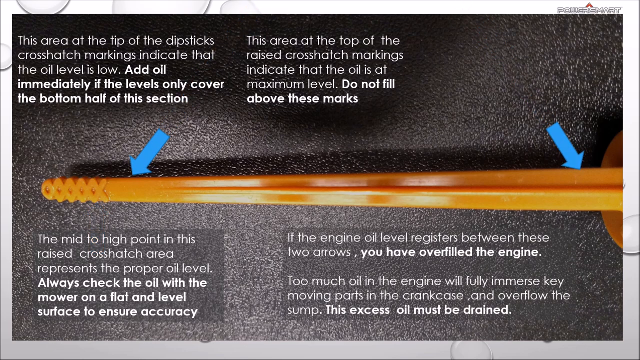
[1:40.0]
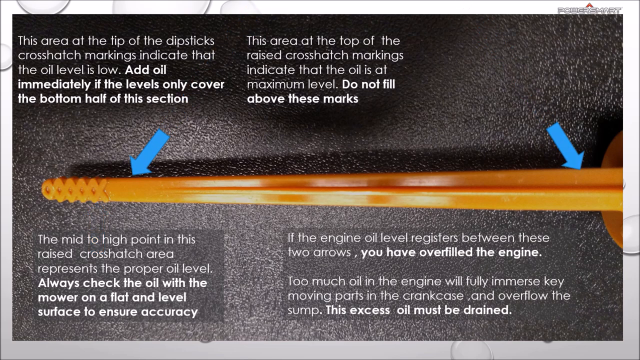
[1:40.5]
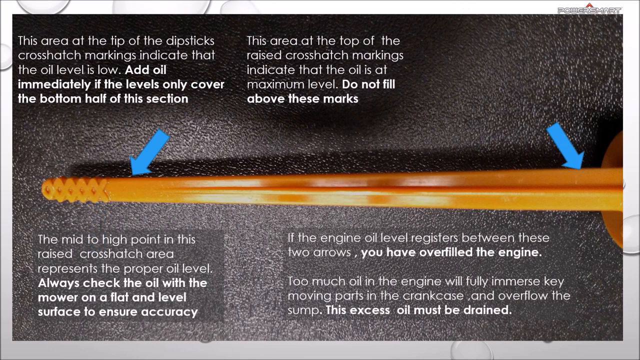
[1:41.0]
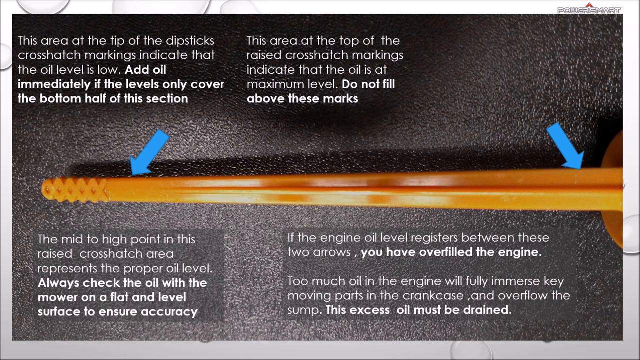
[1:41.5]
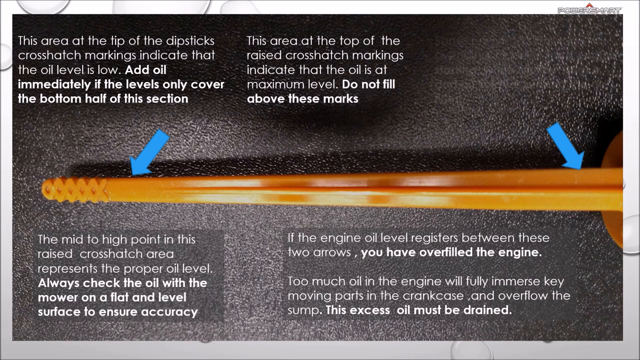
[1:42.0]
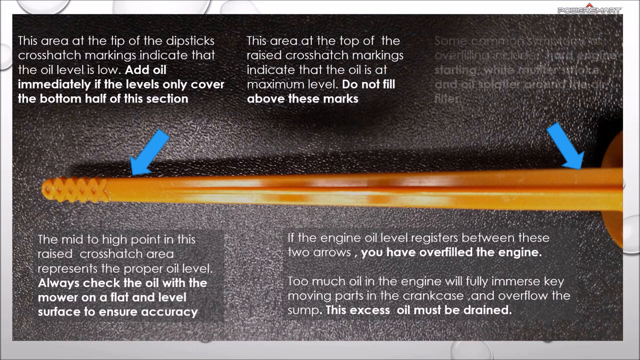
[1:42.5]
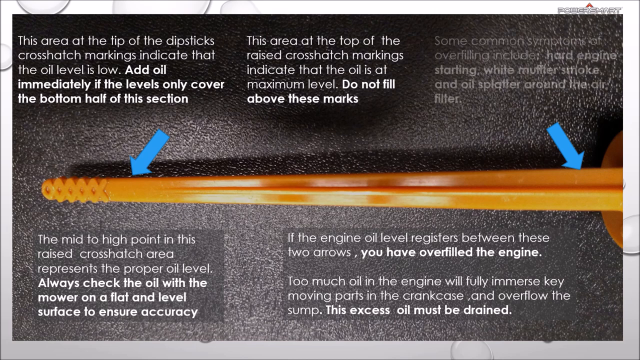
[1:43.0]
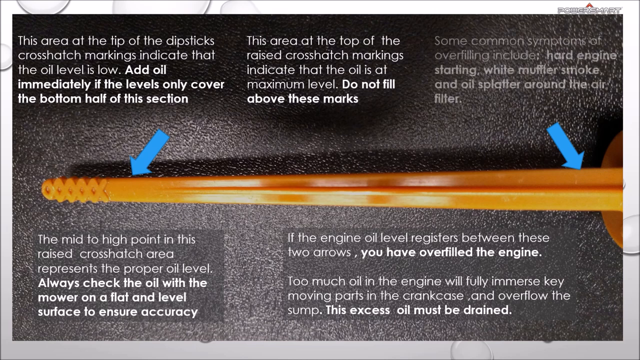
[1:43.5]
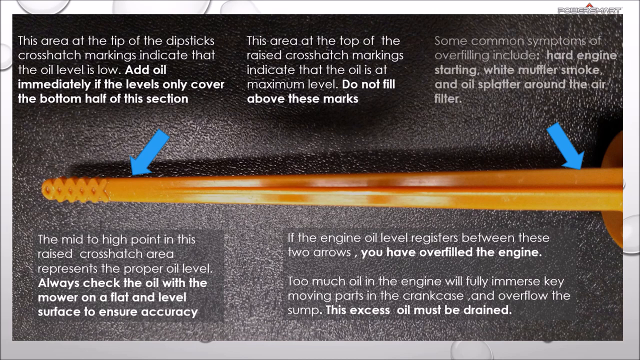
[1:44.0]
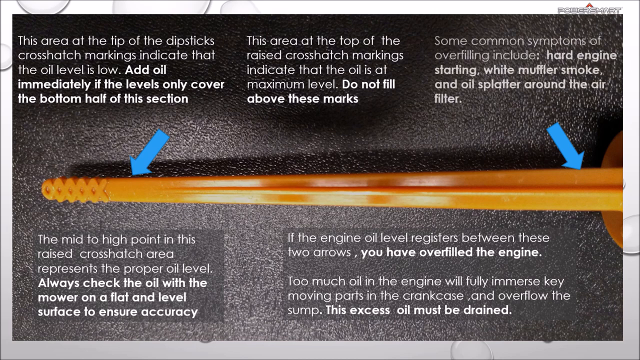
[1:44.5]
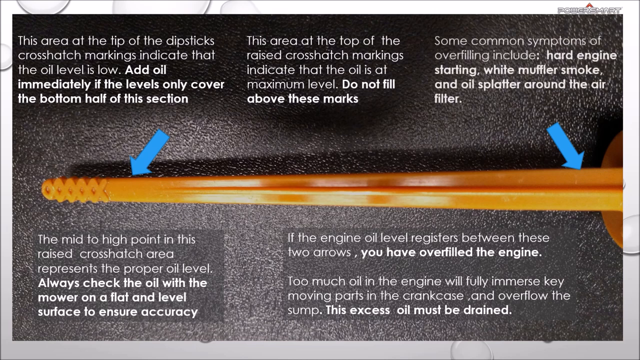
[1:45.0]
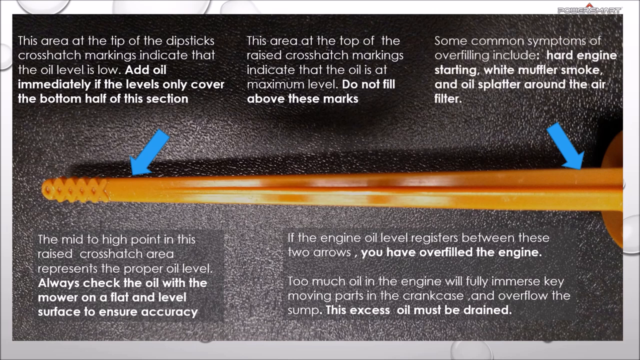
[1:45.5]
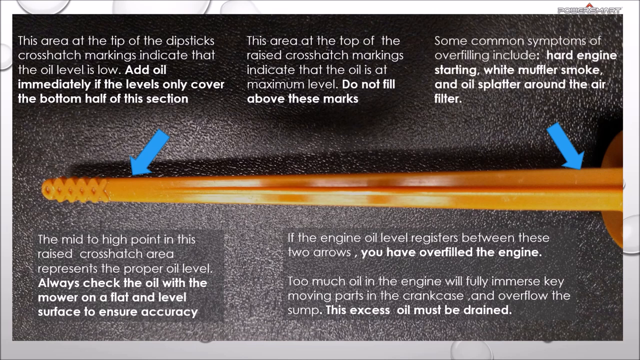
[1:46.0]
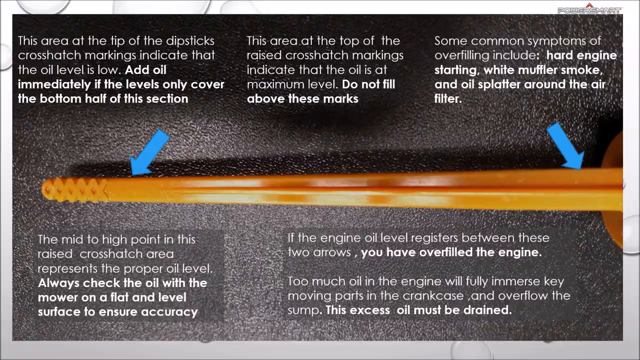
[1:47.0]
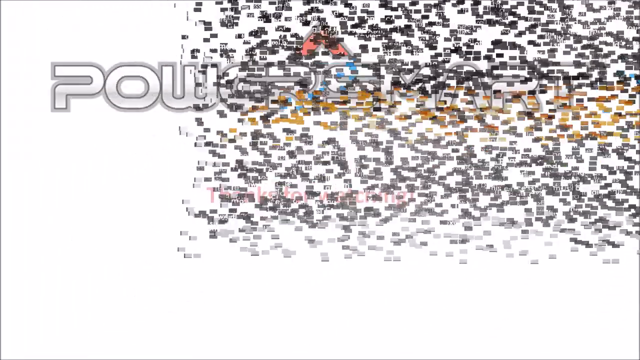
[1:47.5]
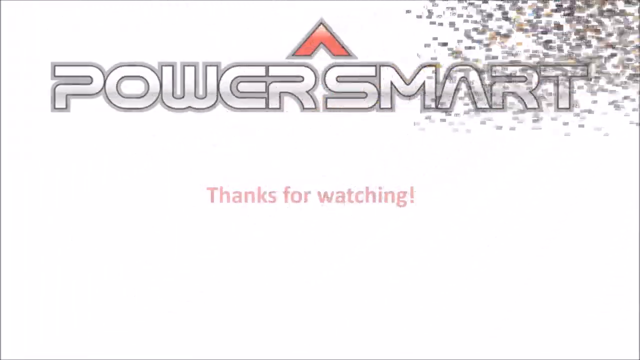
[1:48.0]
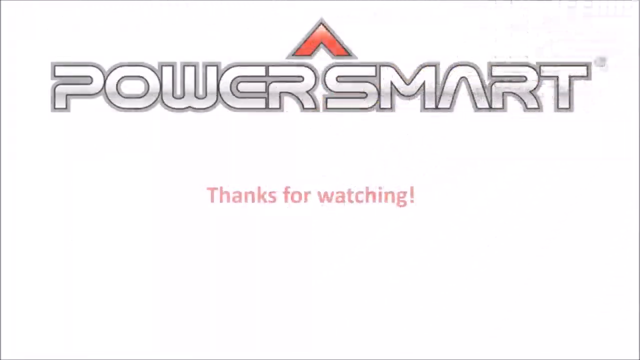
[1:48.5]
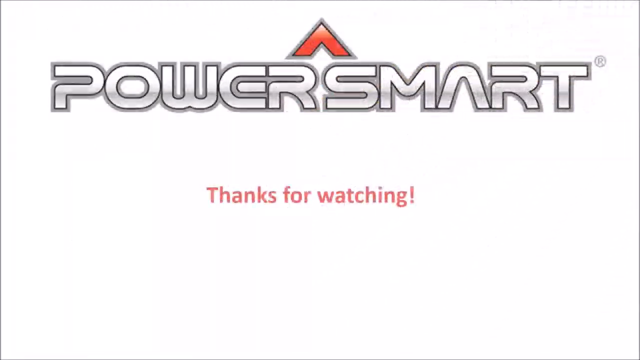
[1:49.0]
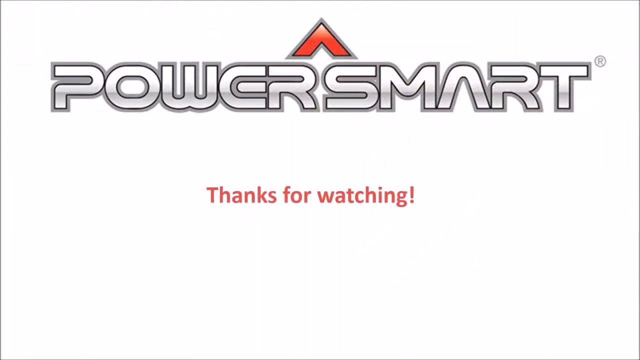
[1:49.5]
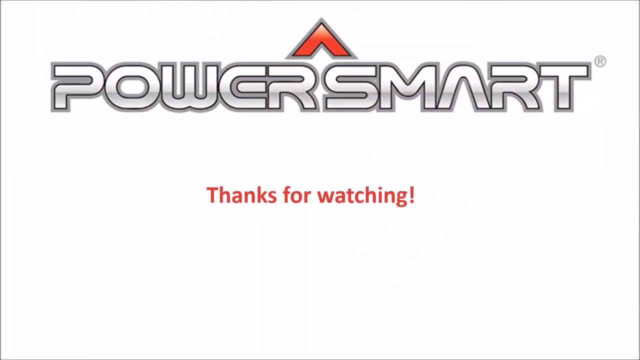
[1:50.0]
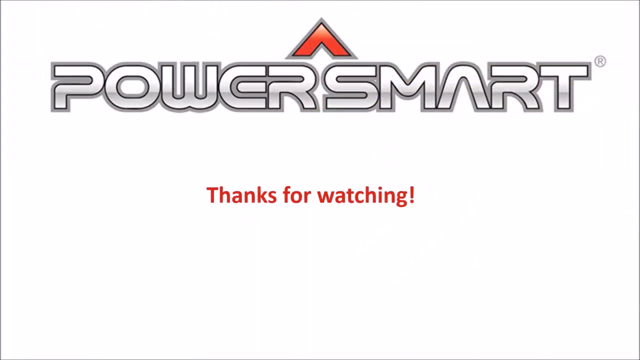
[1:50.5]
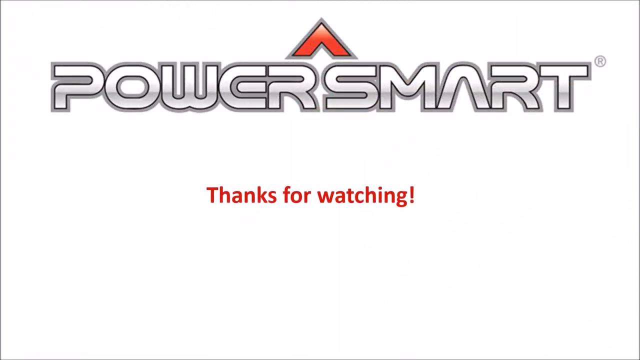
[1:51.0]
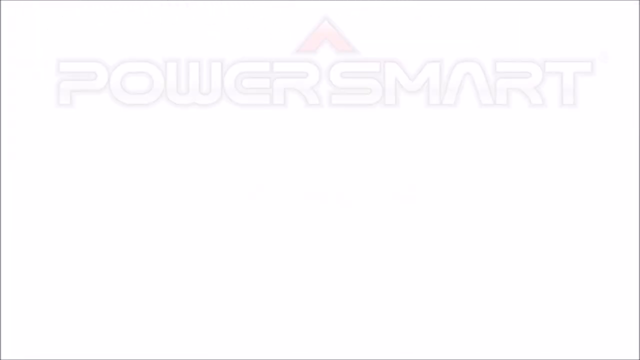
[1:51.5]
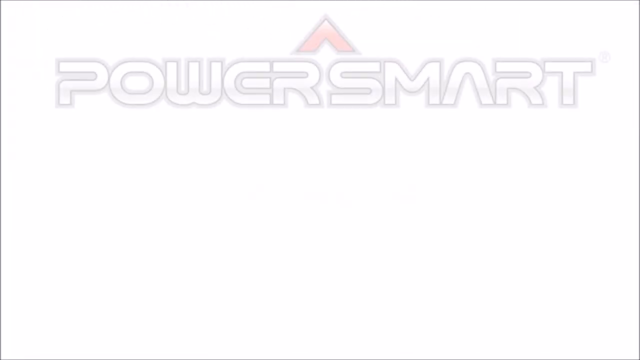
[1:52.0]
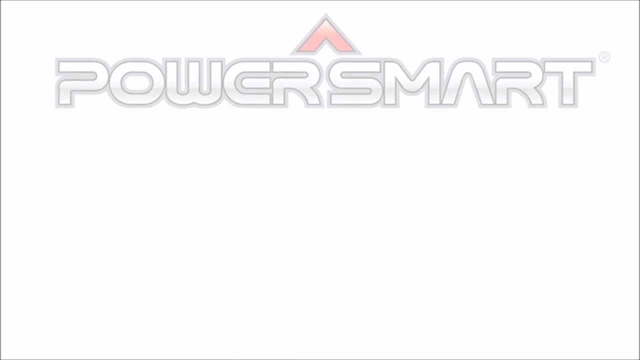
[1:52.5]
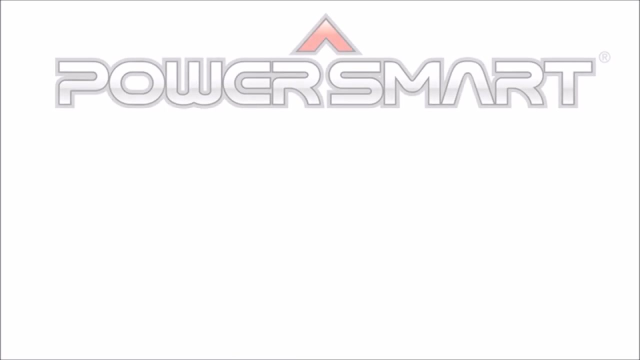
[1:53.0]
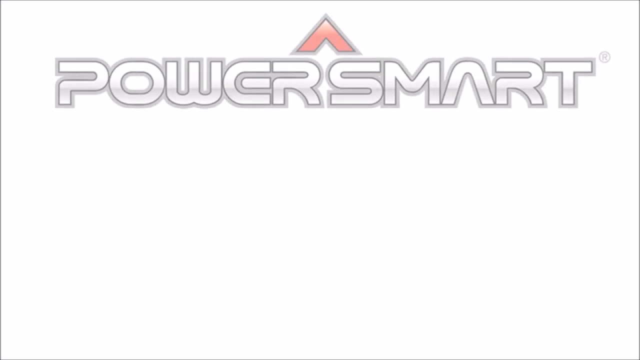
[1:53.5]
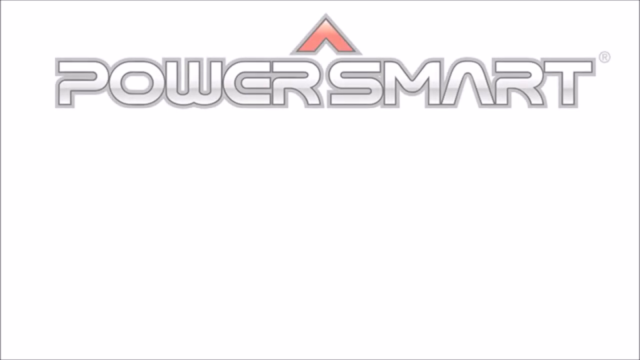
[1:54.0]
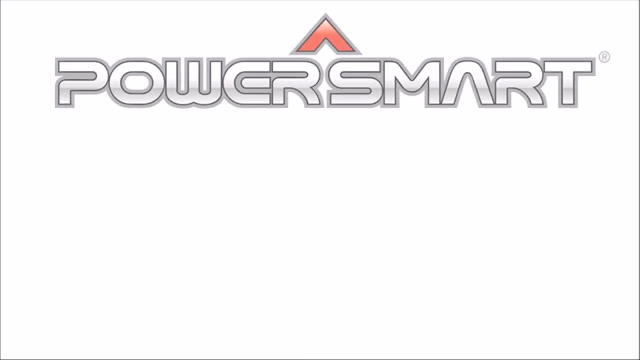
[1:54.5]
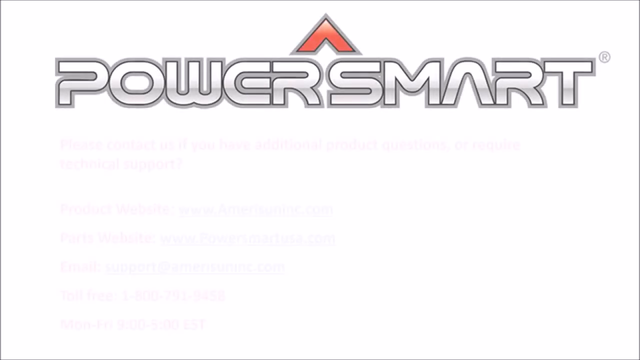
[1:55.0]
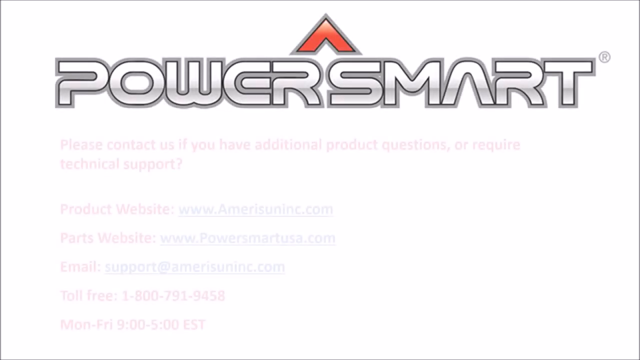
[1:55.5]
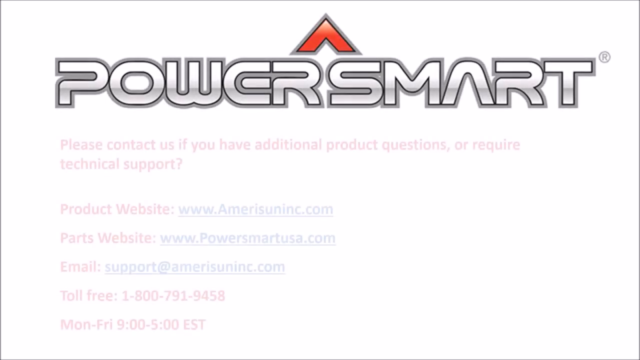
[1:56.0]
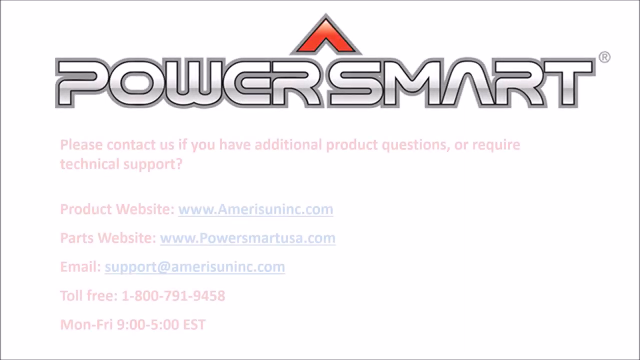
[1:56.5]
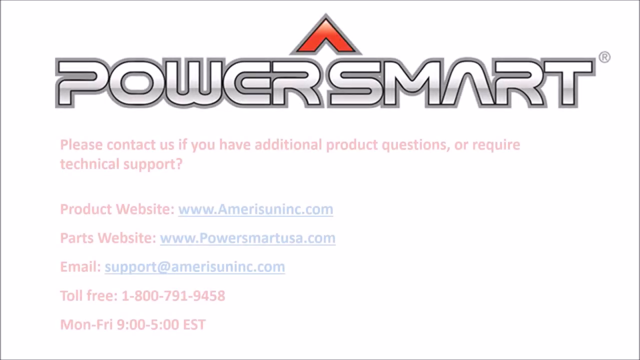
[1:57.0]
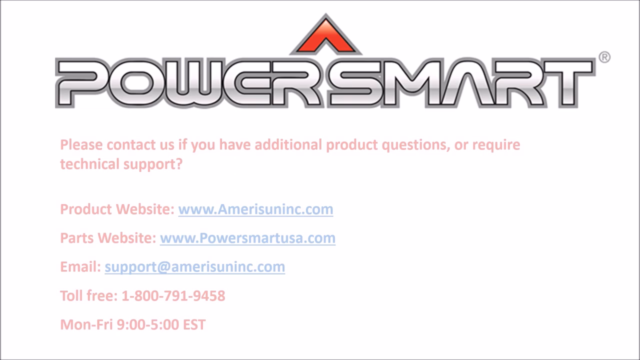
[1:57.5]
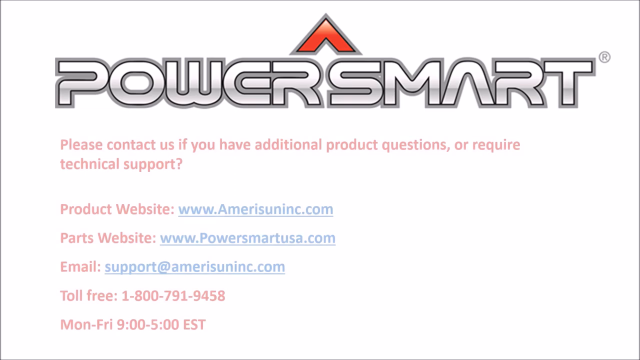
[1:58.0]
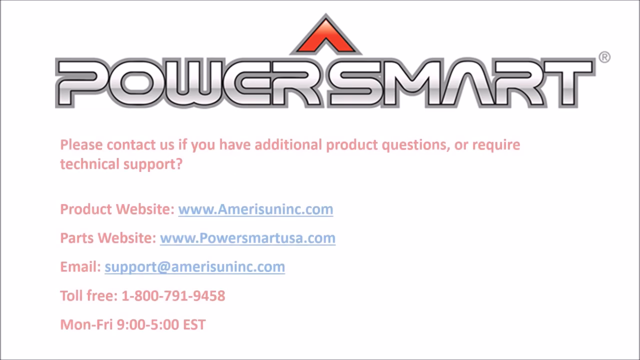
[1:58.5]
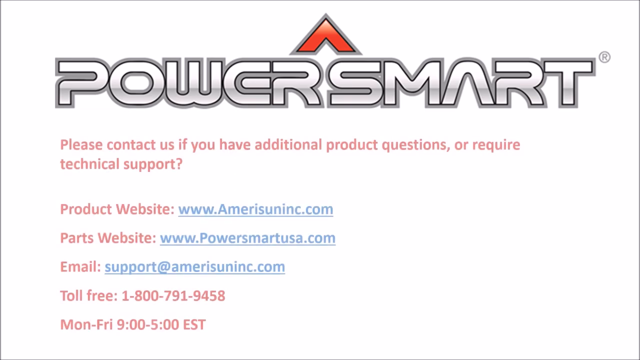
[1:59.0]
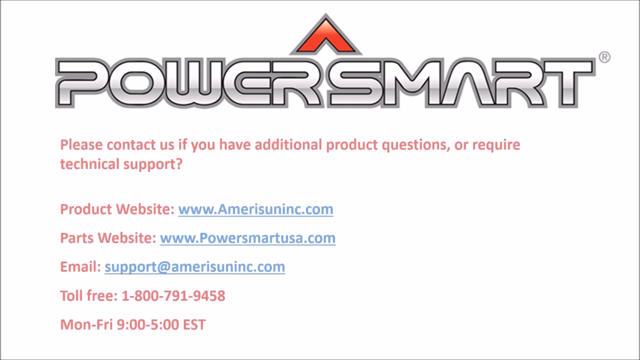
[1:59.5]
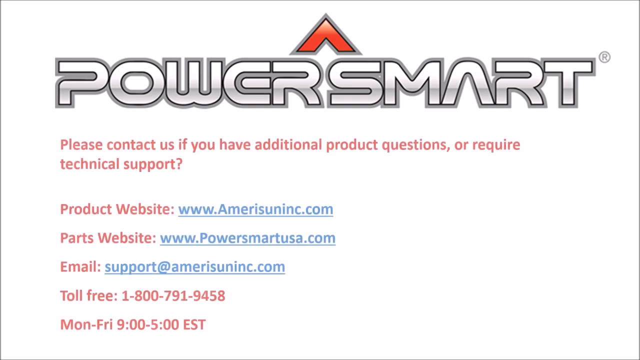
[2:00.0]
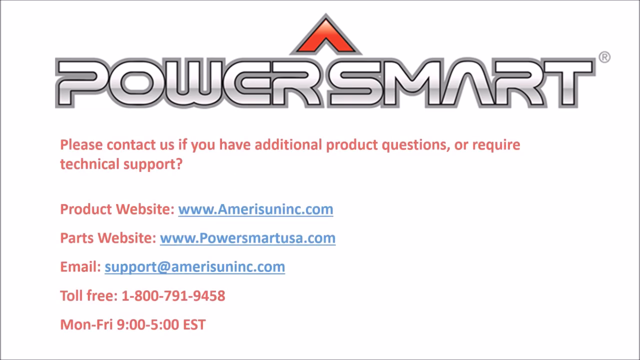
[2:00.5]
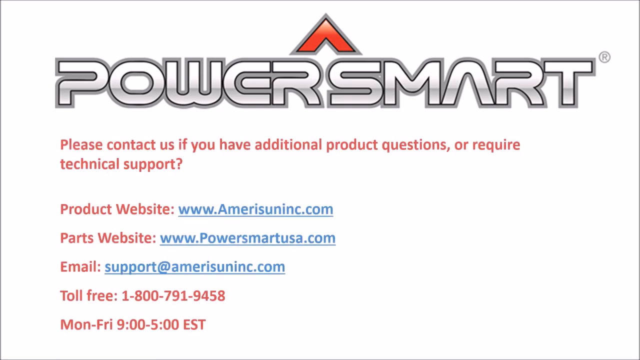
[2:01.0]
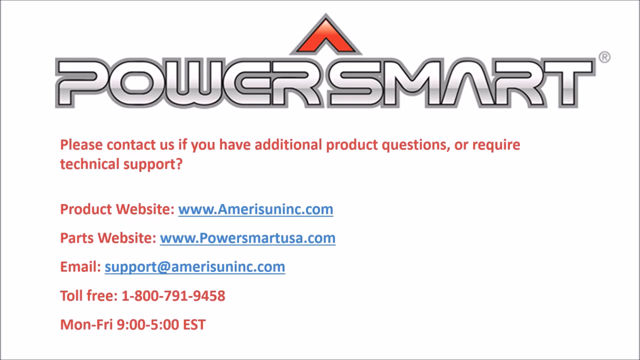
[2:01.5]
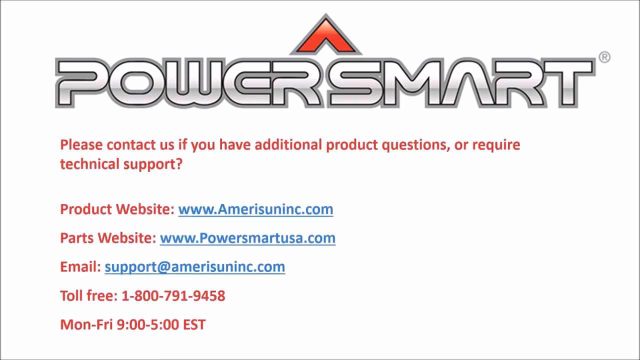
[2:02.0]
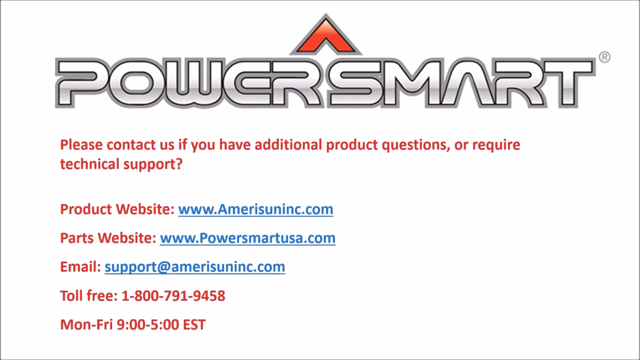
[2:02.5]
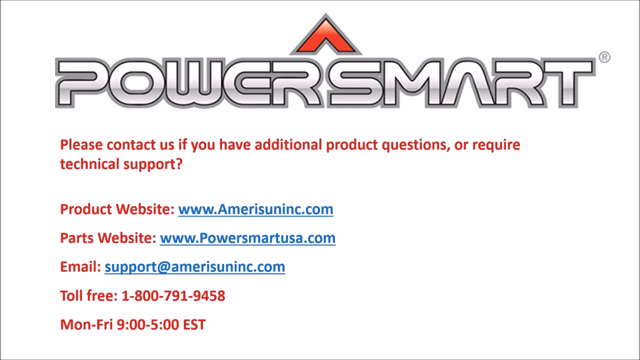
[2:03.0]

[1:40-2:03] The orange dipstick is on a rough black surface, with two blue arrows pointing at its left and right sides in a diagonal formation and the earlier dipstick instructions on screen. A new instruction pops up: "some common symptoms of overfilling include hard engine starting, white muffler smoke, and oil splatter around the air filter". A glass shatter effect transitions to the PowerSmart logo with a red triangle on top on a white background. The logo is at the top, and below it in red it says "thanks for watching". The screen fades out to white, with all the words and the PowerSmart logo disappearing. The PowerSmart logo then suddenly reappears, and below it in red it says "please contact us if you have additional product questions or require technical support". Next, "Product Website" appears in red with the website in blue beside it; below that, "Part's website" in red with the website in blue beside it; below that, "Email" in red with the support email address right next to it; and below that, the toll-free number and the opening times in red.